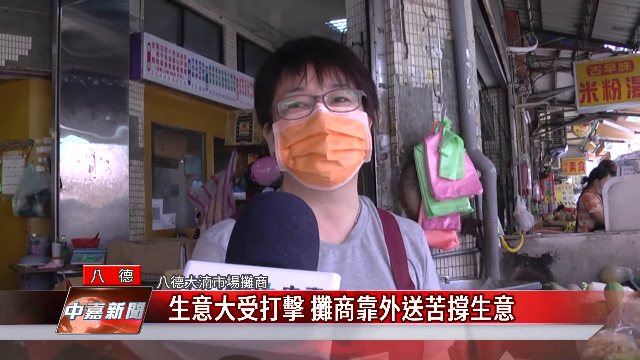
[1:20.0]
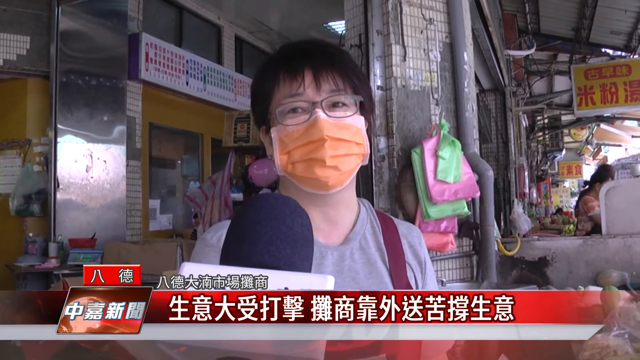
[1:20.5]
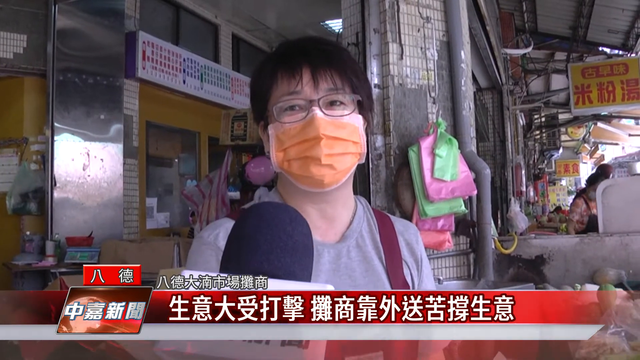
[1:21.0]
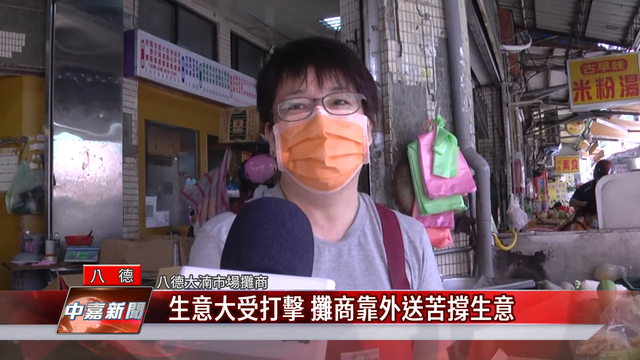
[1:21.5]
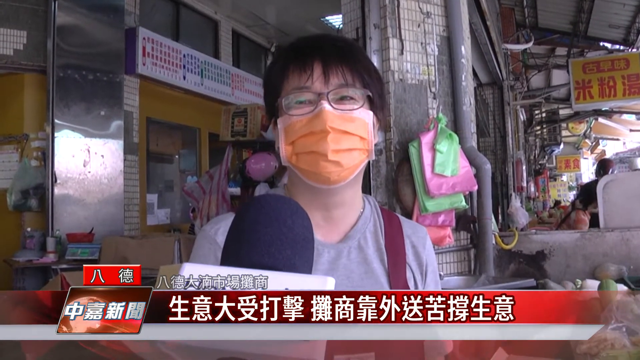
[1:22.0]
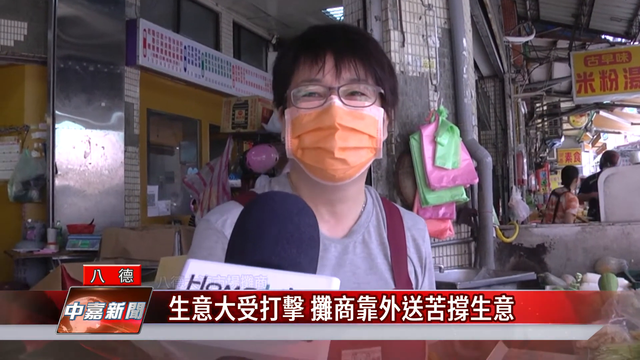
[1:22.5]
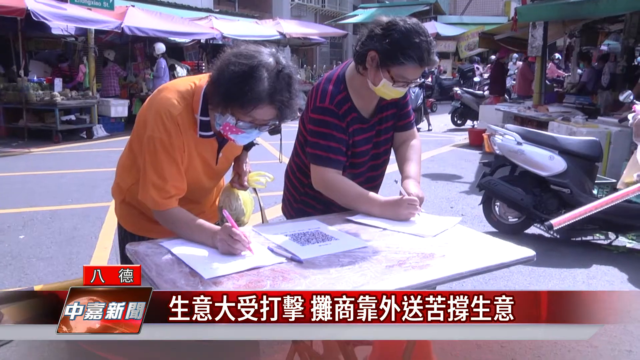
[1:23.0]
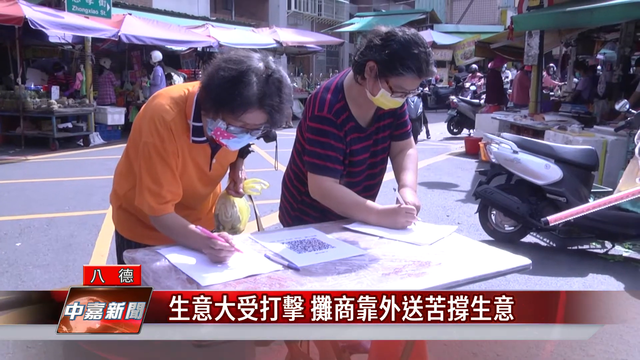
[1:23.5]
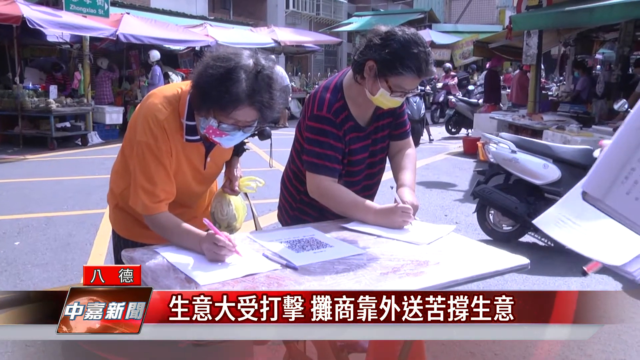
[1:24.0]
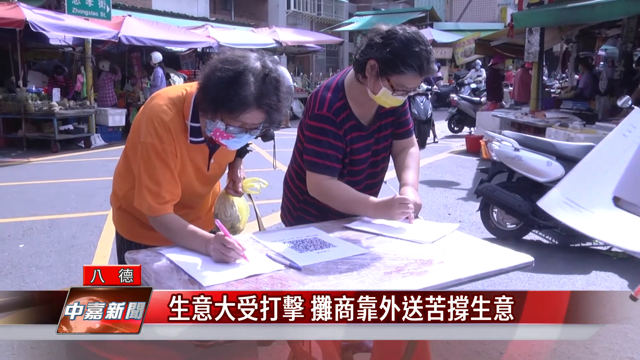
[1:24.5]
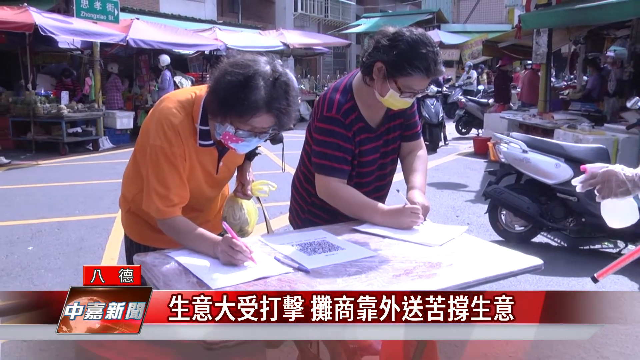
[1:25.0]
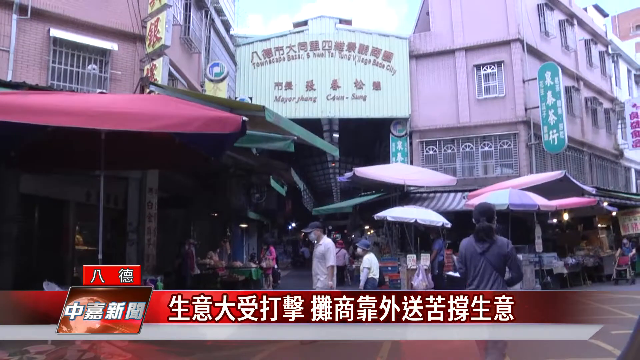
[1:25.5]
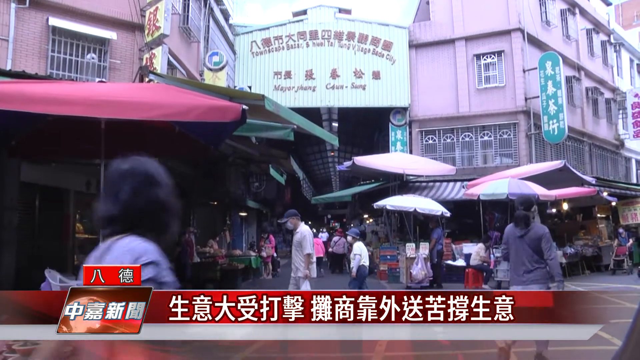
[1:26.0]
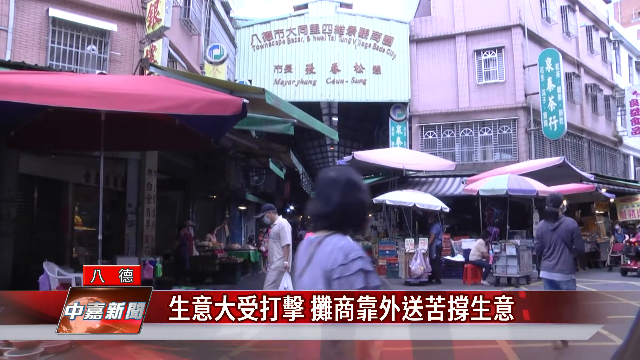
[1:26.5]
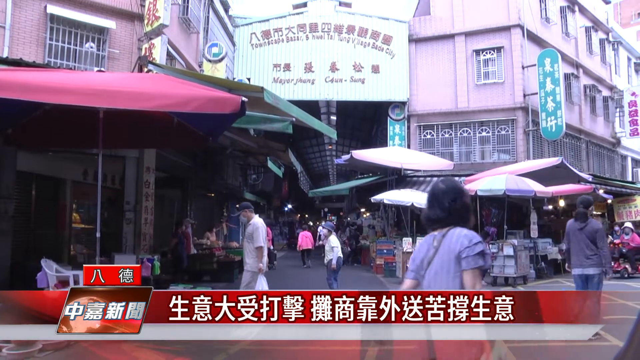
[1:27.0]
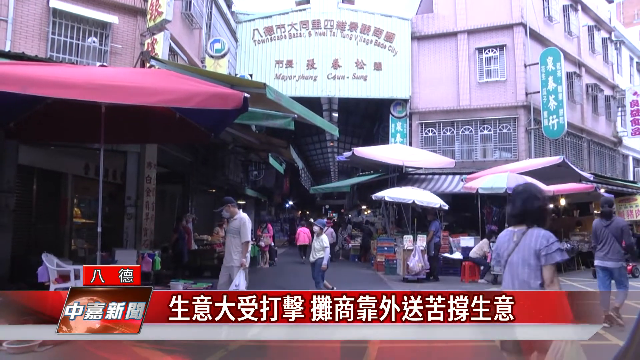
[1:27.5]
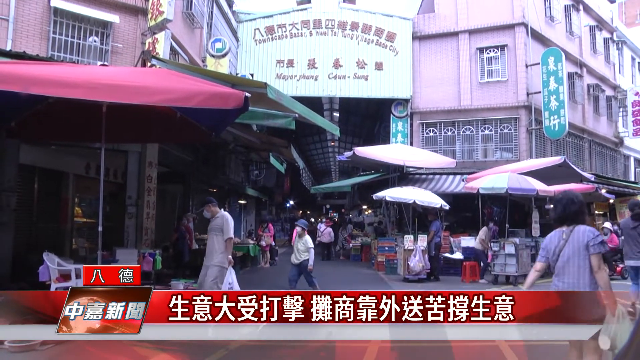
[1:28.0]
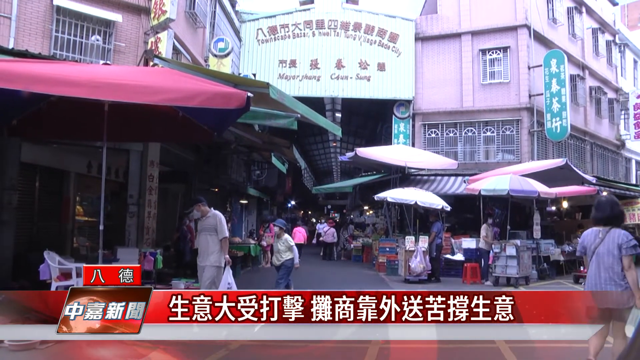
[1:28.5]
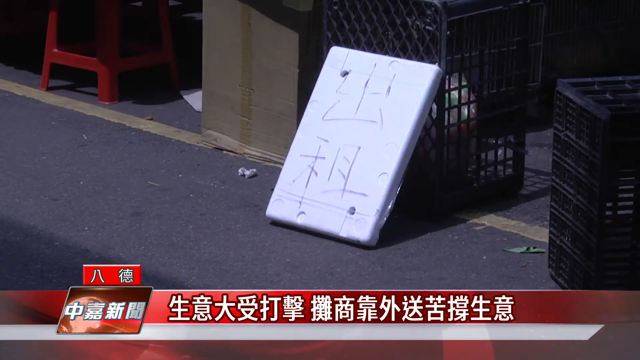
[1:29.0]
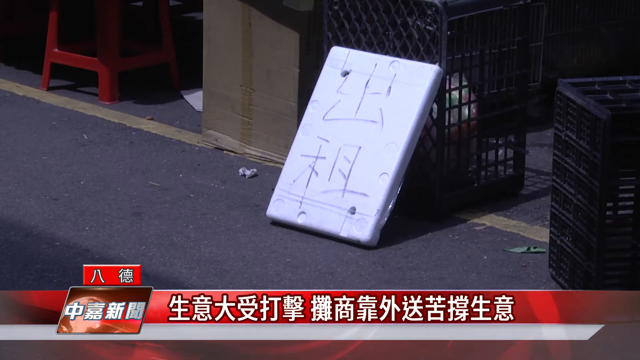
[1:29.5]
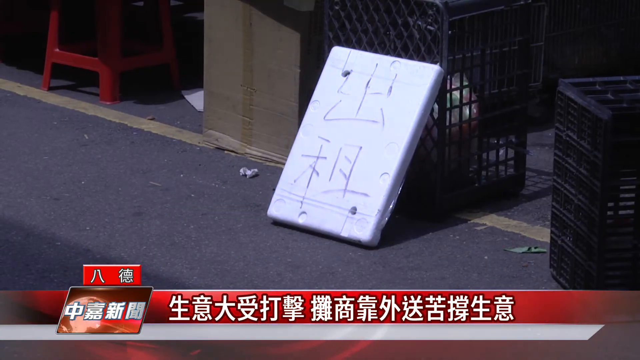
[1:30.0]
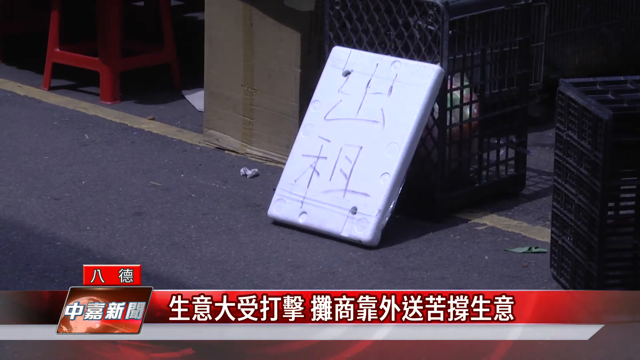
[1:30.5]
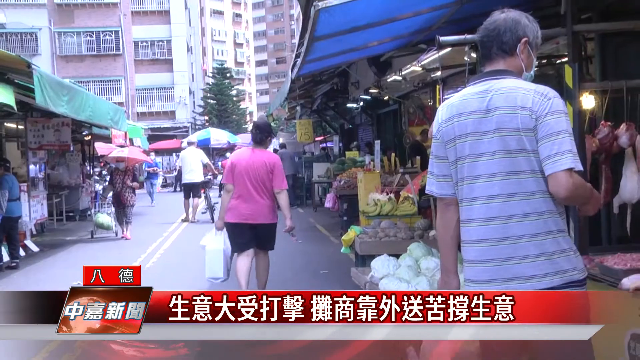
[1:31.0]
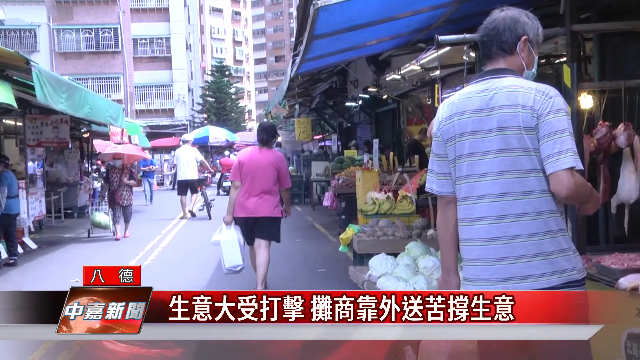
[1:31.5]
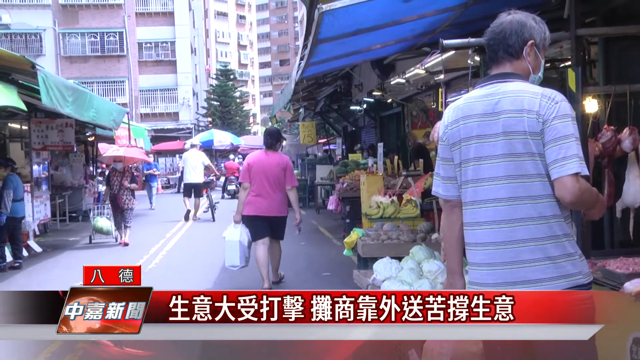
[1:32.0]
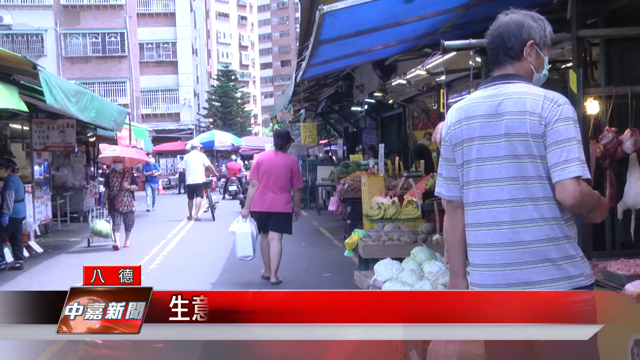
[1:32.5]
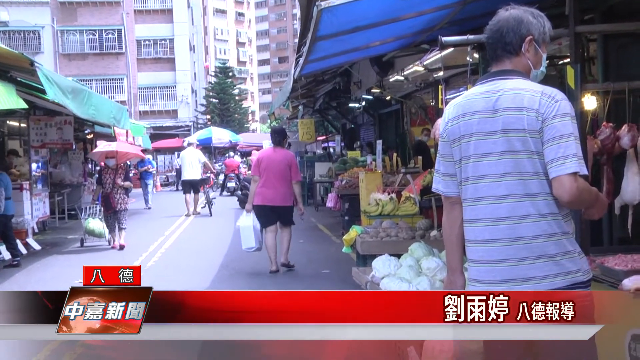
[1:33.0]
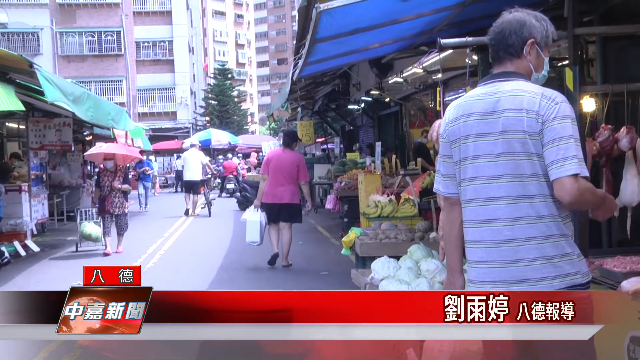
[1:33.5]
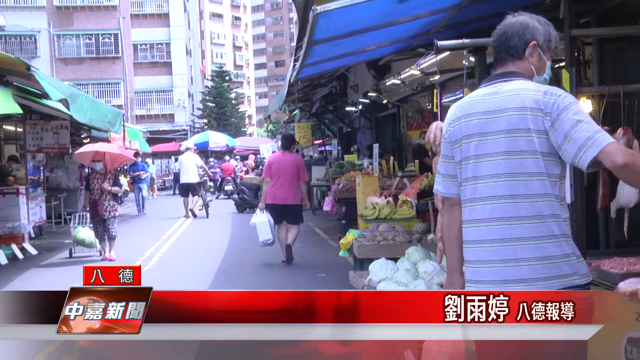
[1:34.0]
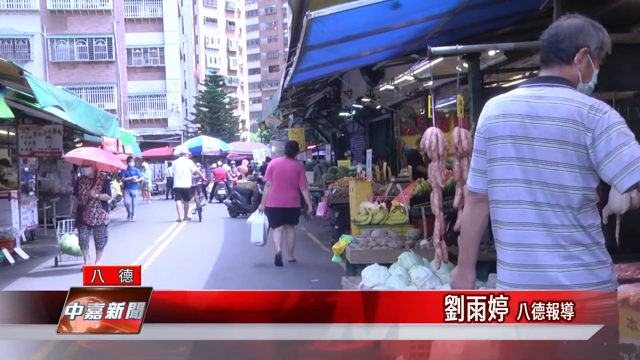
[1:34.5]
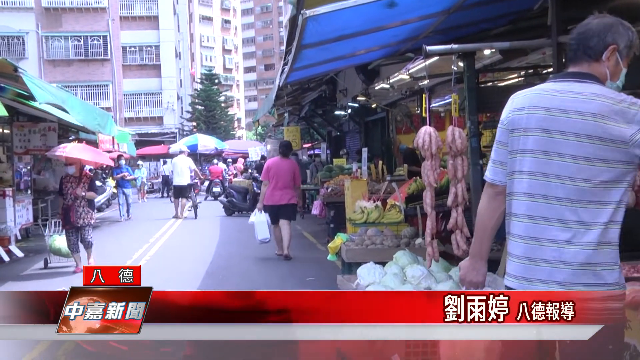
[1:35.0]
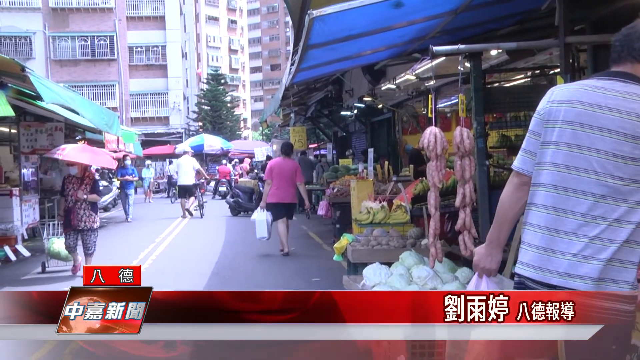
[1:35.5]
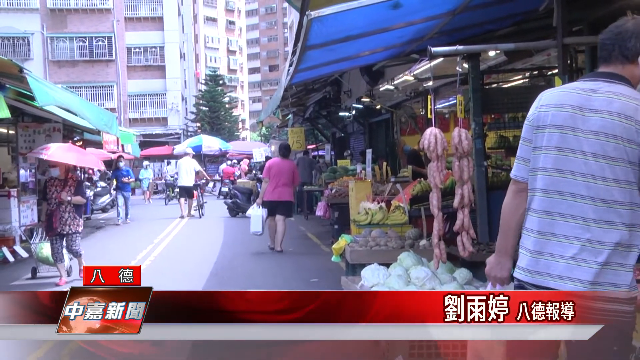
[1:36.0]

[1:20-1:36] A person is being interviewed in what looks like an open-air market with stalls. They wear a gray shirt, a maroon apron, an orange mask and possibly burgundy-toned glasses. A red banner, possibly a news banner of some sort, runs along the bottom with white text characters, possibly in some sort of Asian language. The black mic cover on the blue and white microphone is visible. The person is at a stall, with other workers and some signs in the background. The video then transitions to people who look hunched over a table. One appears to be an elderly person in an orange and black shirt, wearing a mask and glasses, holding a yellow bag and apparently a pink pen. Next to them is a person in a navy or black and red striped shirt, a yellow mask and glasses, who is writing on a sheet of paper. There almost looks to be a sheet of paper with possibly a QR code on it. Open-air stalls and some mopeds are in the background. The women appear to be trying to get people to sign up for something. The video then moves to B-roll of markets in a downtown area, with people milling about and walking by. A white thing is propped in some black crates, followed by more B-roll of people shopping. Judging by the masks, this possibly took place during COVID.